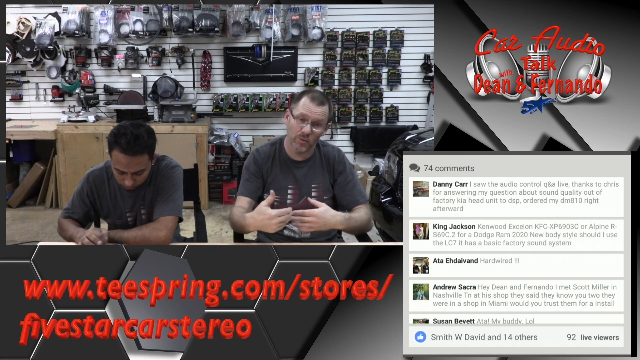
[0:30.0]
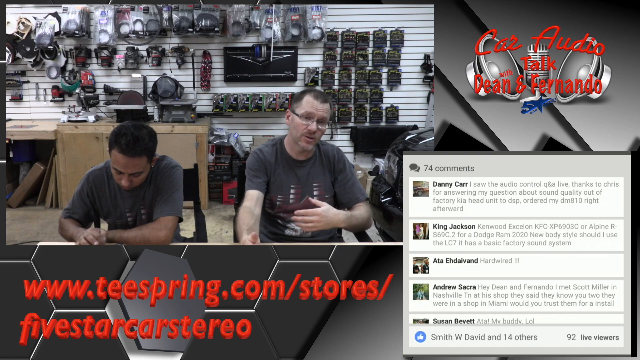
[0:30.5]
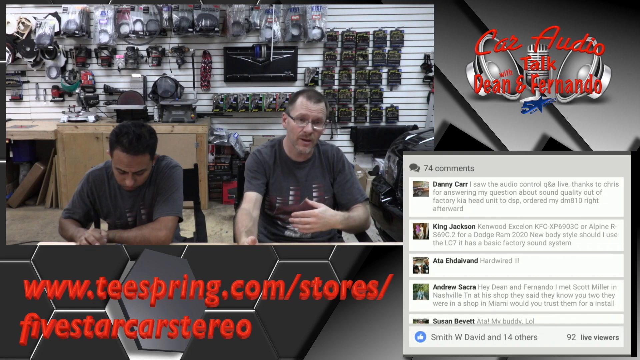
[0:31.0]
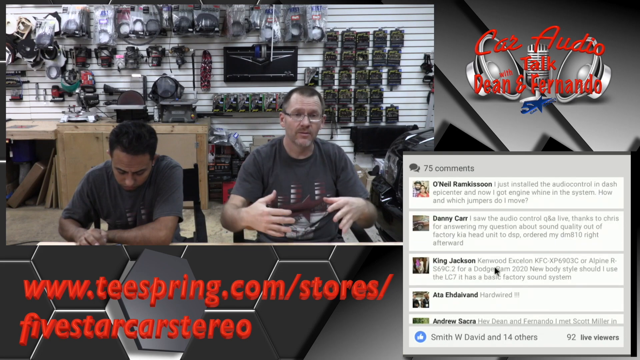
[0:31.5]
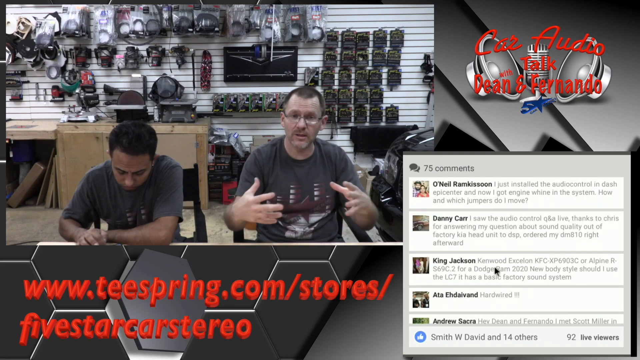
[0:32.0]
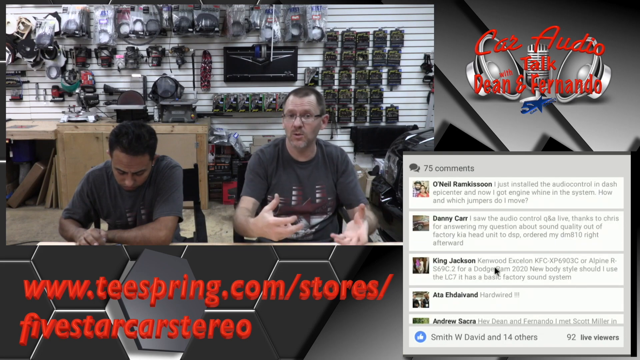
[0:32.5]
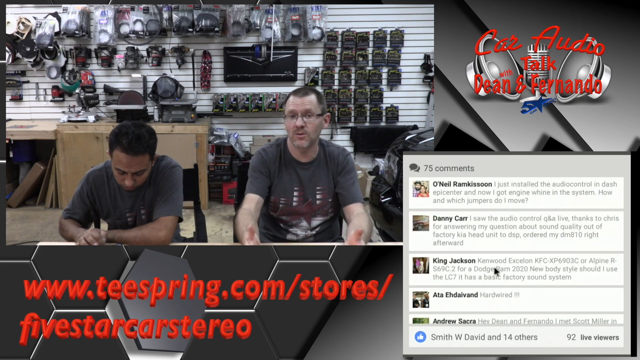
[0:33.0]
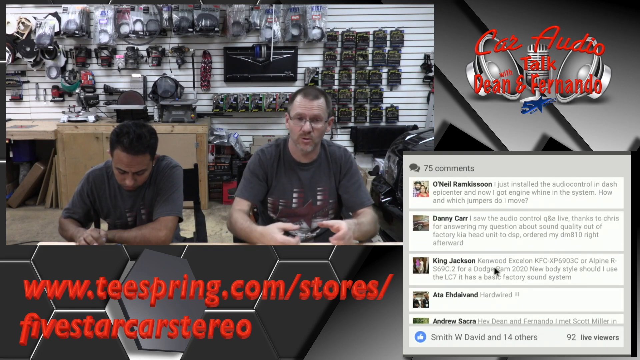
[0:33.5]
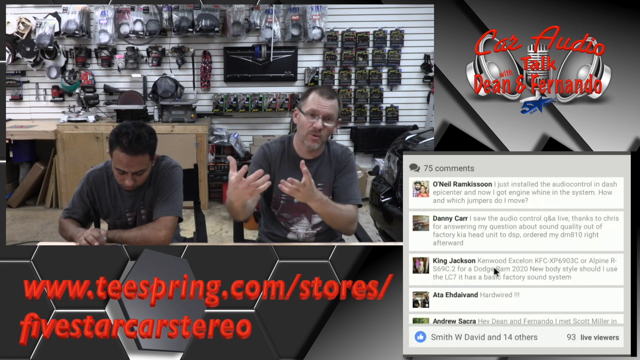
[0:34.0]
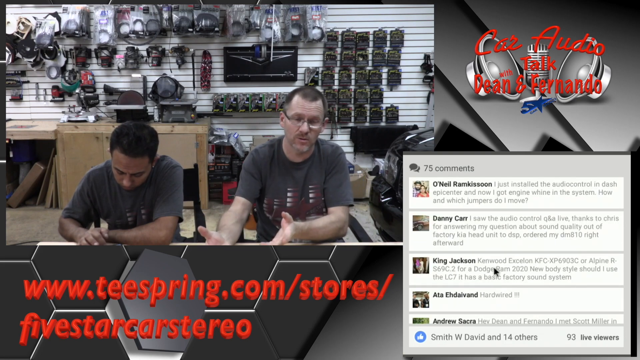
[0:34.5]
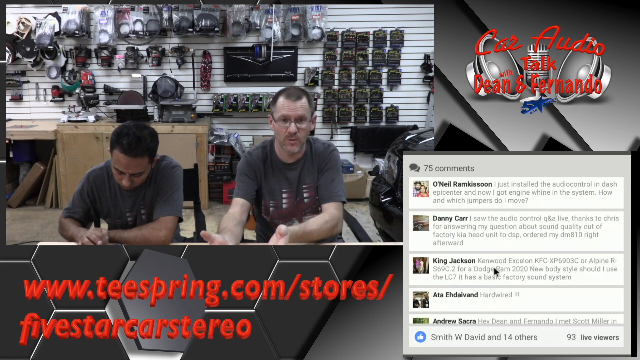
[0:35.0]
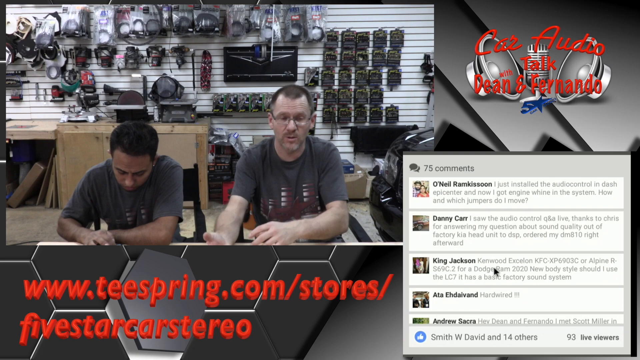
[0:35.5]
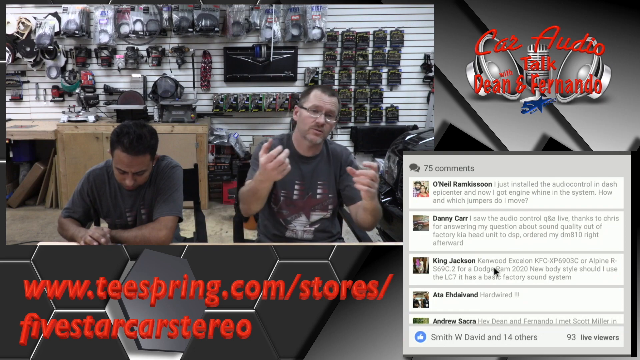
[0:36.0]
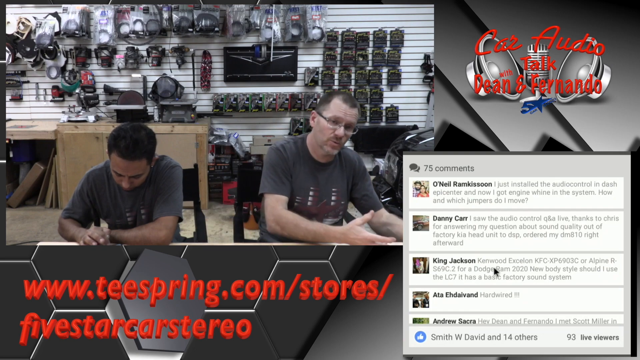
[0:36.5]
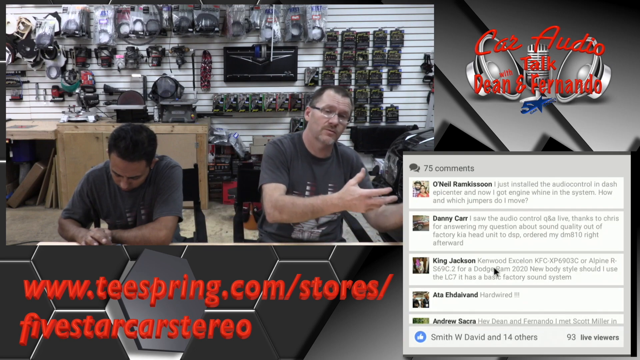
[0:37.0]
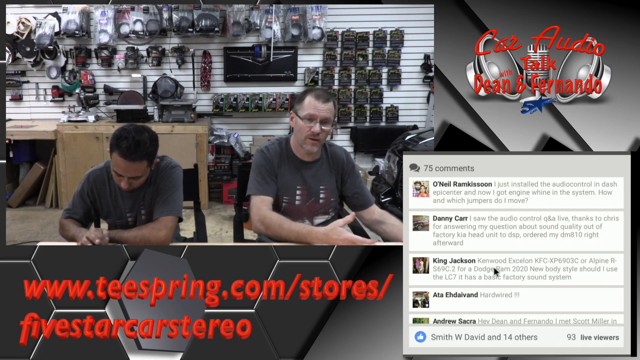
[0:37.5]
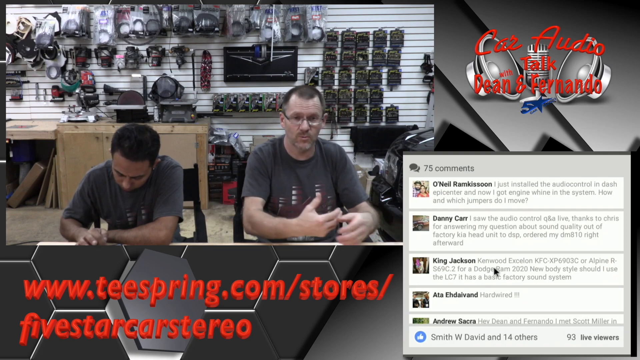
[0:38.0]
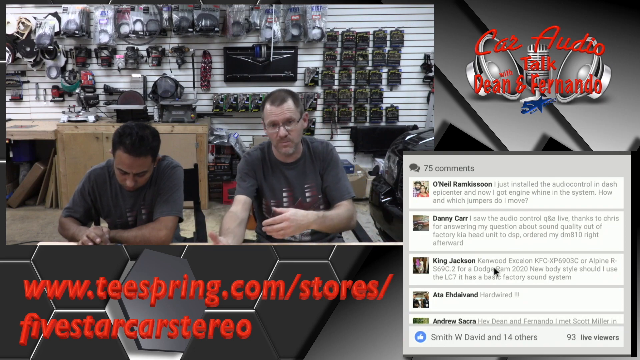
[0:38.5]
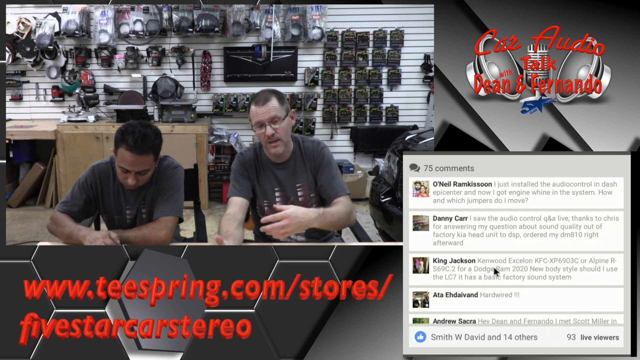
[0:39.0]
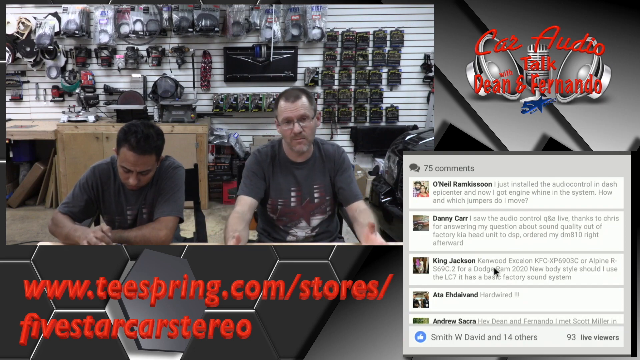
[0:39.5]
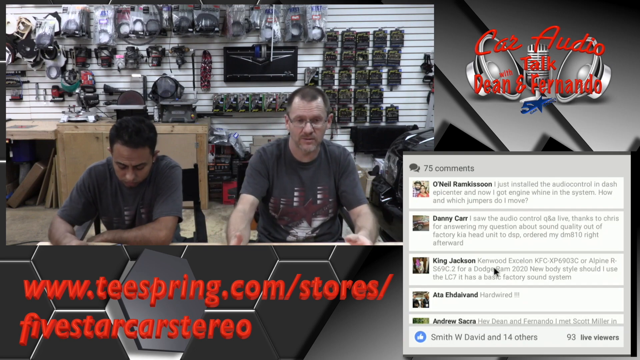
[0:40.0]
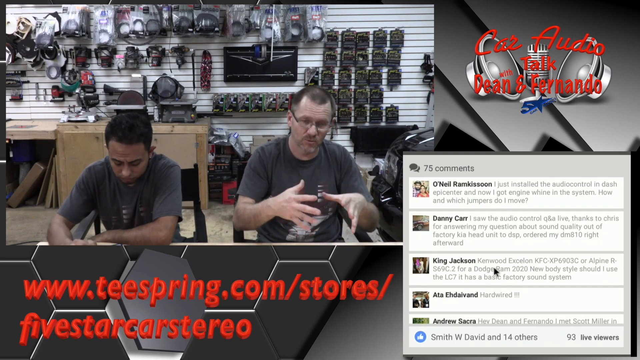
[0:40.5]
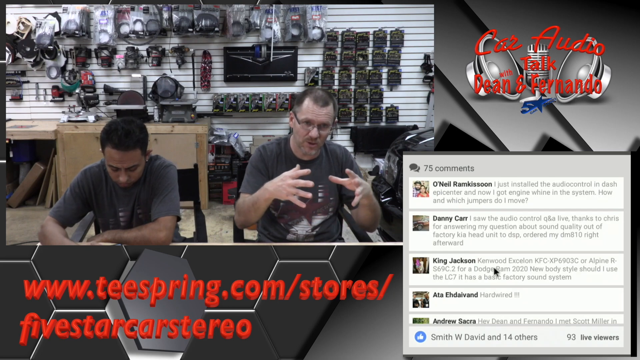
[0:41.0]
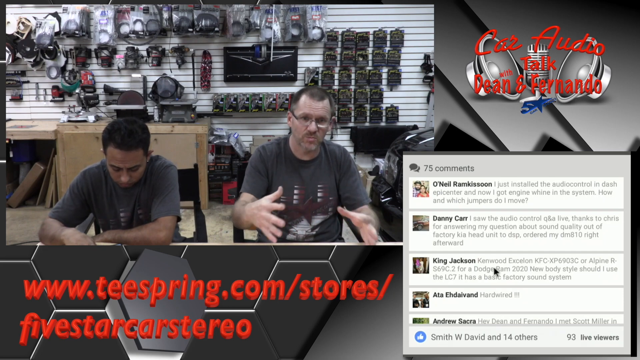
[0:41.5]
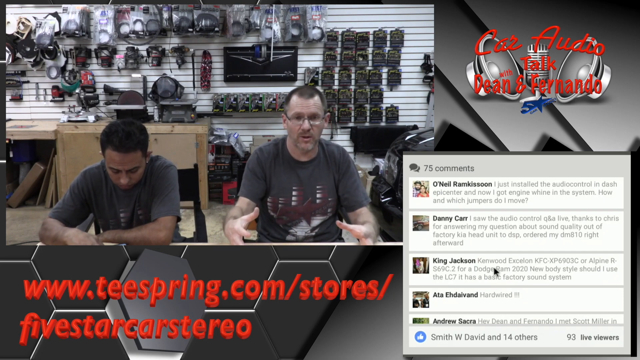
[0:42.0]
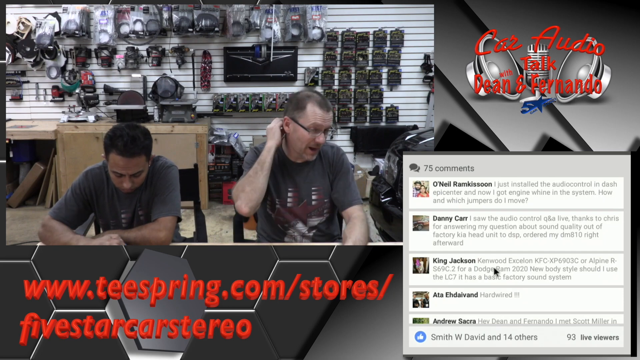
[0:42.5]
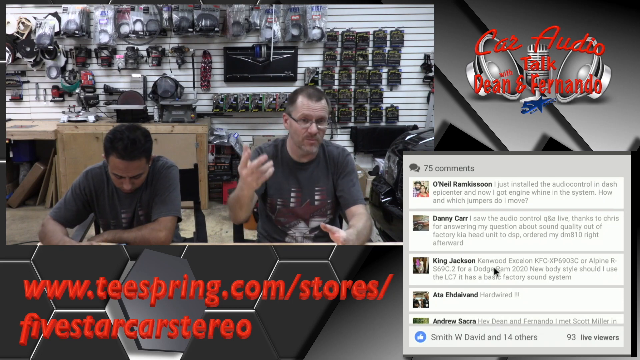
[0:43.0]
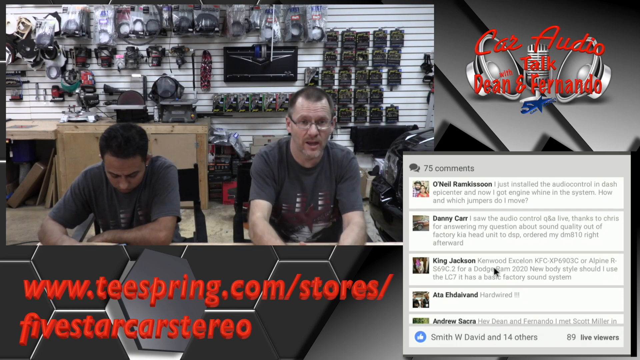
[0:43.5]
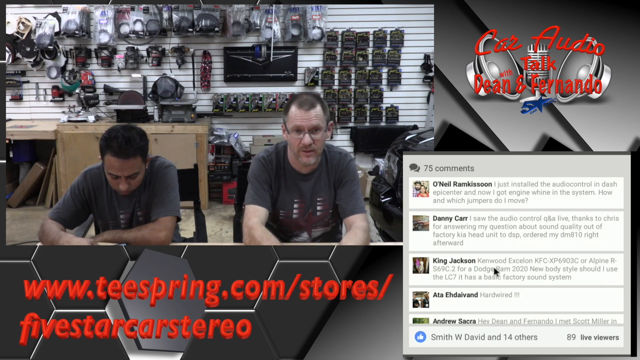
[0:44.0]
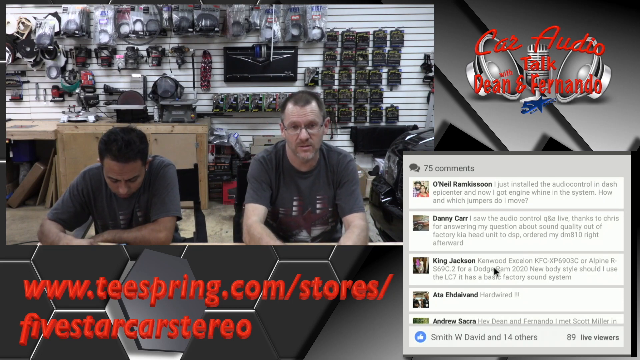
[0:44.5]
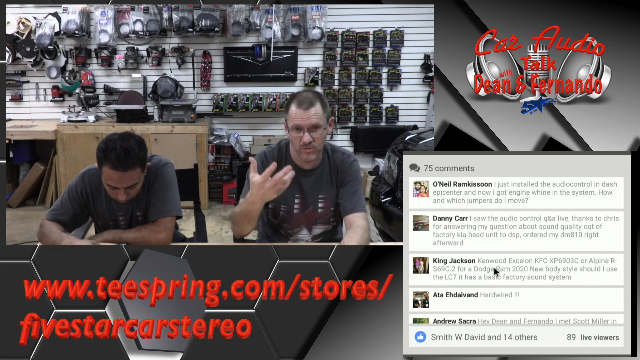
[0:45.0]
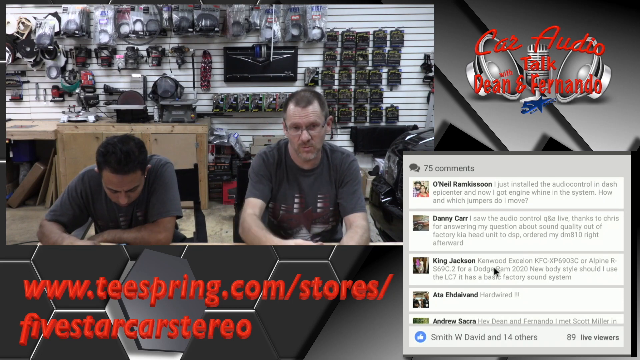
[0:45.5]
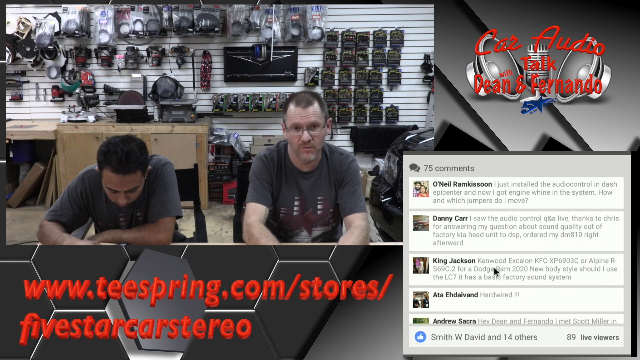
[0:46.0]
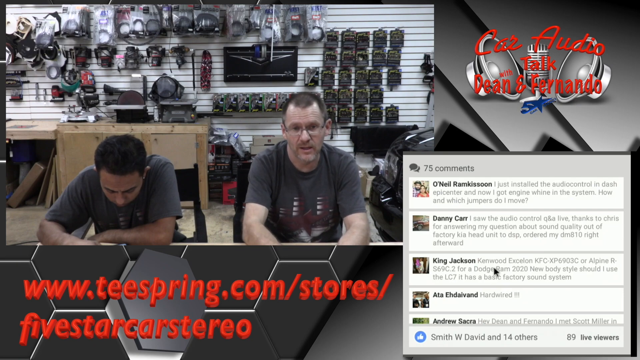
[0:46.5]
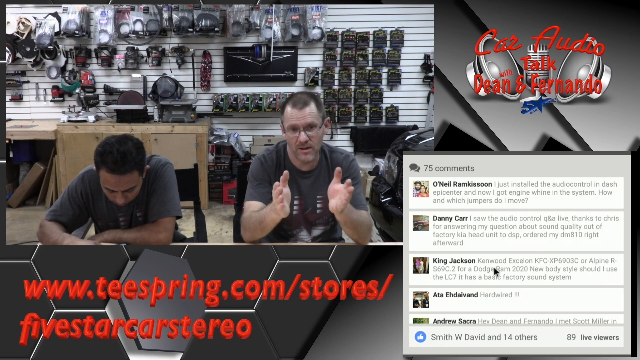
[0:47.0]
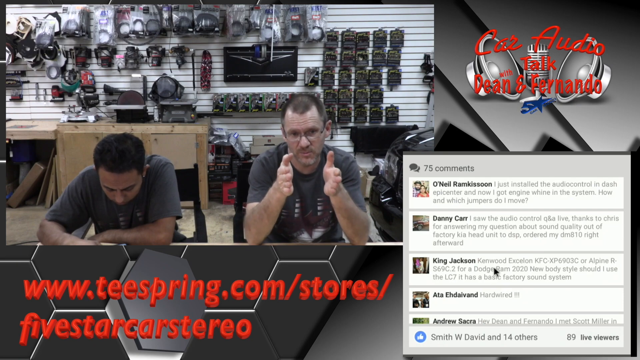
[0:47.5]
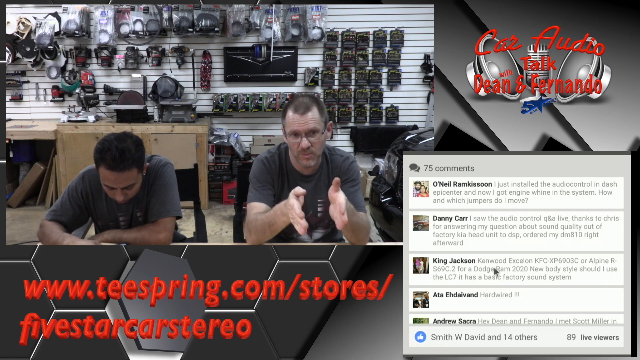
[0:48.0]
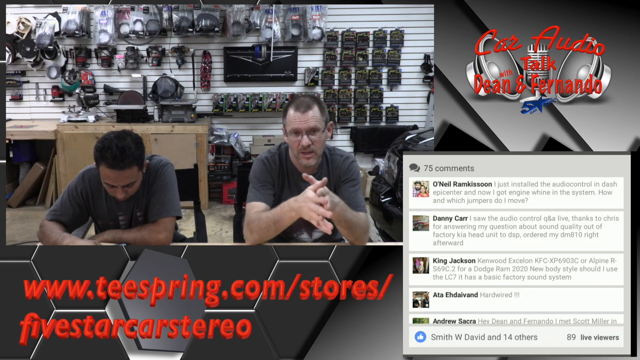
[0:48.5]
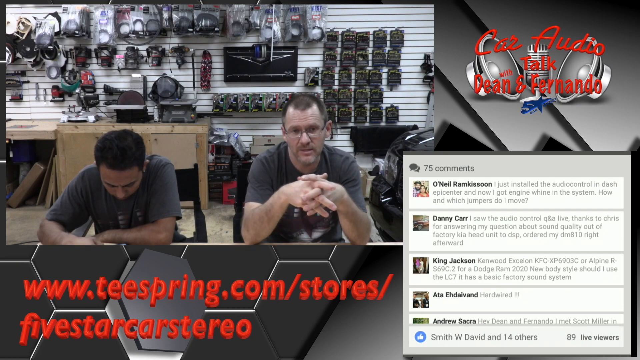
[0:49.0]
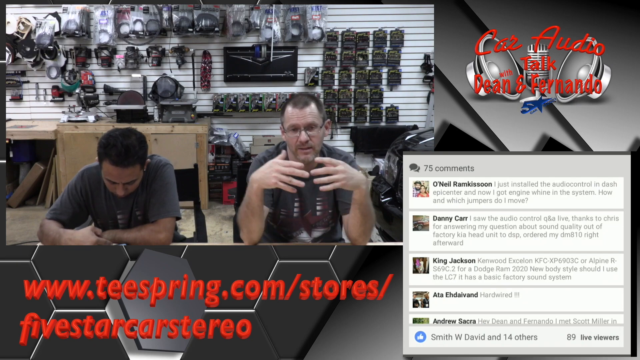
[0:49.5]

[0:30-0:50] The video looks like some sort of stream in which two men sit in front of a table and talk toward the camera, a Latino man on the left and a white man on the right. Behind them is a white wall with many things hanging off it, and on the left is a wooden workbench with a grinder on top and what looks like some sort of saw. At the bottom left of the frame, red text reads "www.tspring.com/store/five star car stereo". At the bottom right is a rectangular pop-up that looks like a chat box, with "74 comments" at its top left. At the top right, red text reads "car audio talk with Dean and Fernando". Both men face the camera and appear to be sitting in front of a table. The Latino man rests his elbows on the table while scrolling on a phone that is below the picture. The white man on the right appears to keep talking, with his elbows on the table, making many hand gestures: interlocking his fingers and turning his palms outward. Both wear gray T-shirts and have short hair, and the white man wears glasses. The Latino man seems to keep looking through his phone, while the white man talks very animatedly, waving his hands around with his arms mostly stationary on the table.